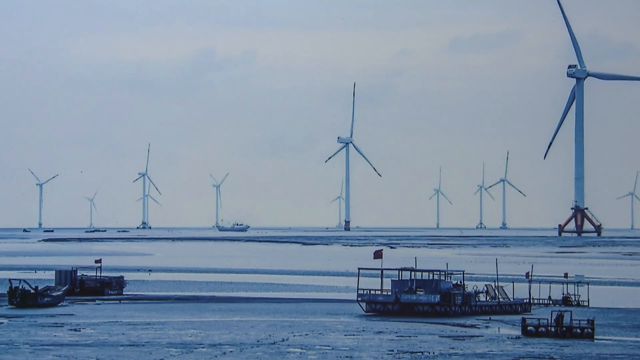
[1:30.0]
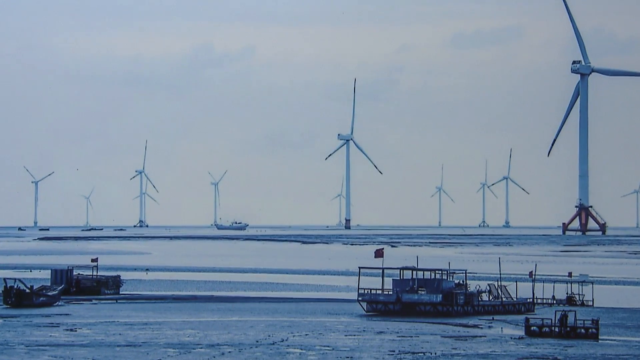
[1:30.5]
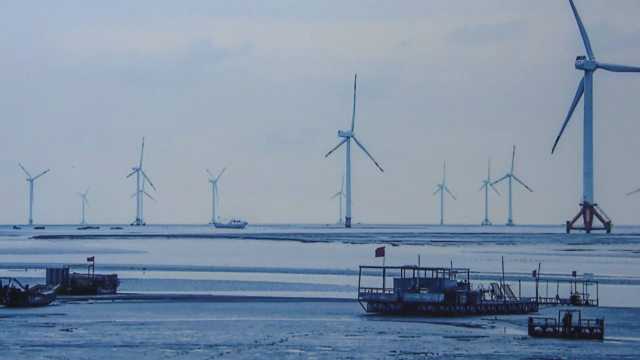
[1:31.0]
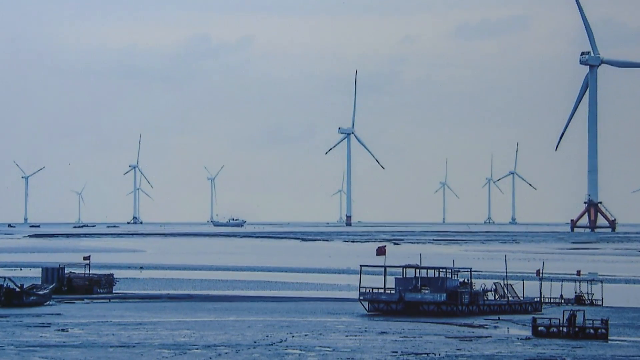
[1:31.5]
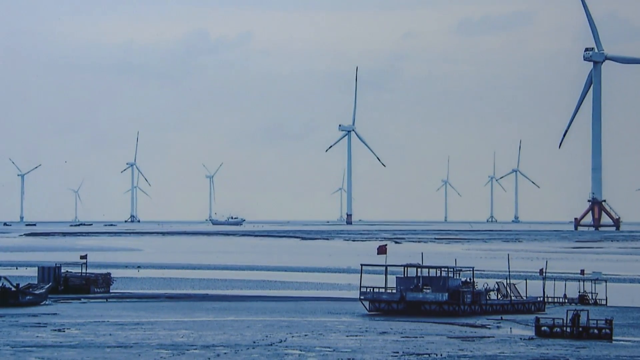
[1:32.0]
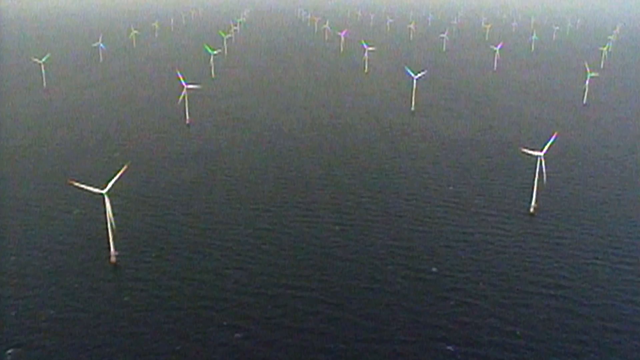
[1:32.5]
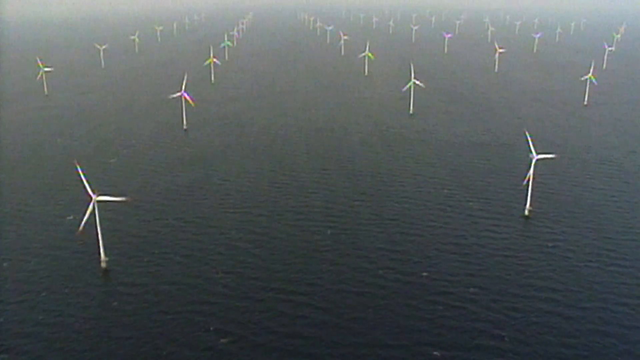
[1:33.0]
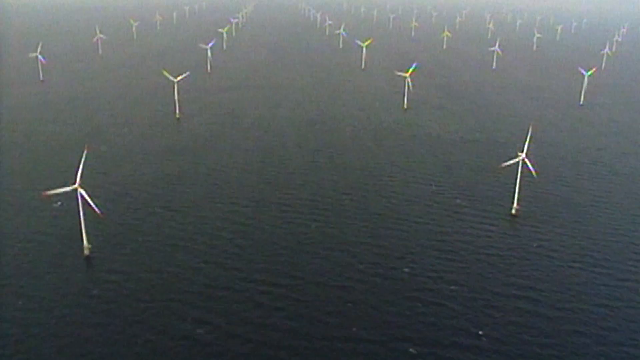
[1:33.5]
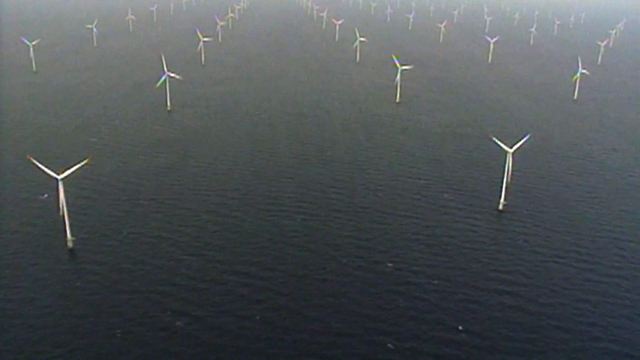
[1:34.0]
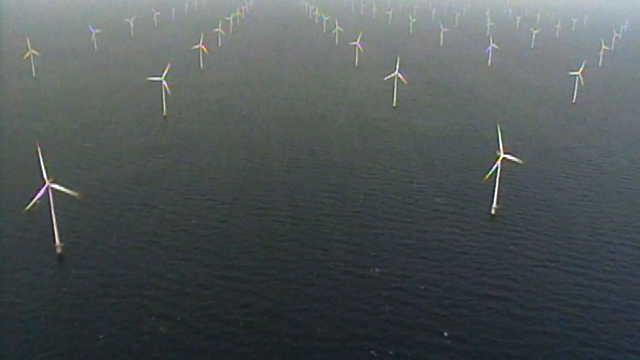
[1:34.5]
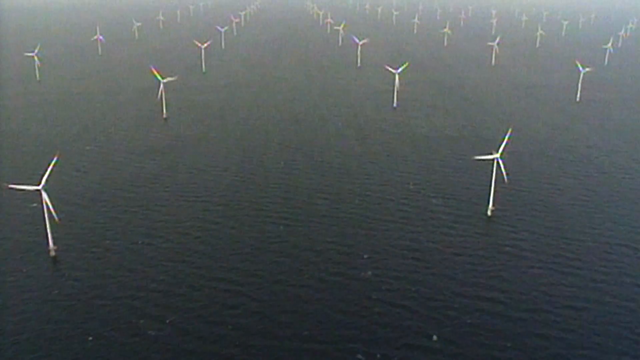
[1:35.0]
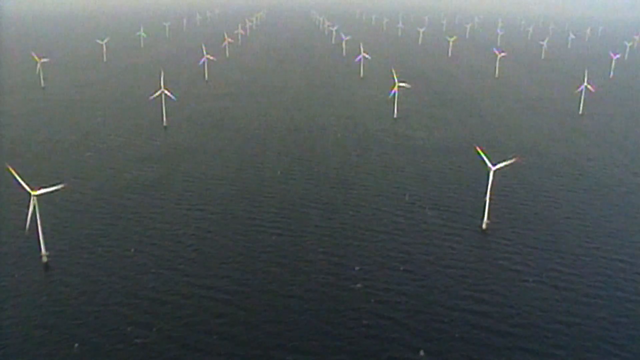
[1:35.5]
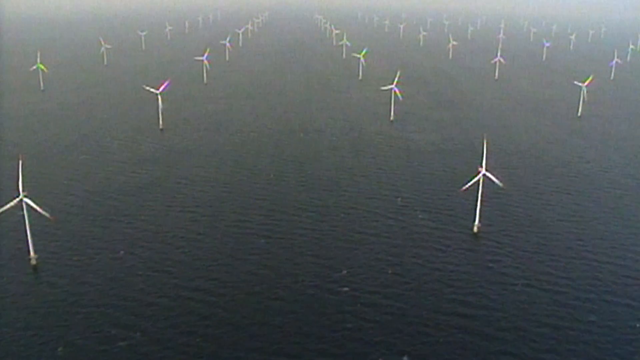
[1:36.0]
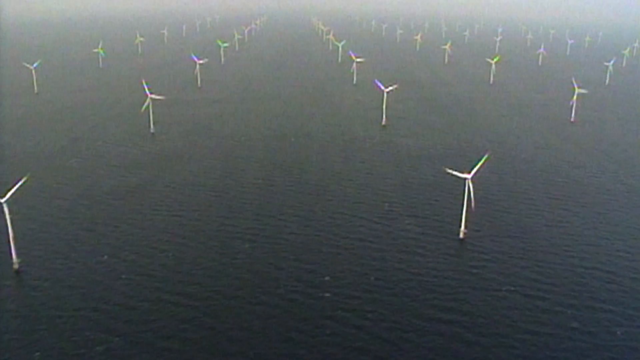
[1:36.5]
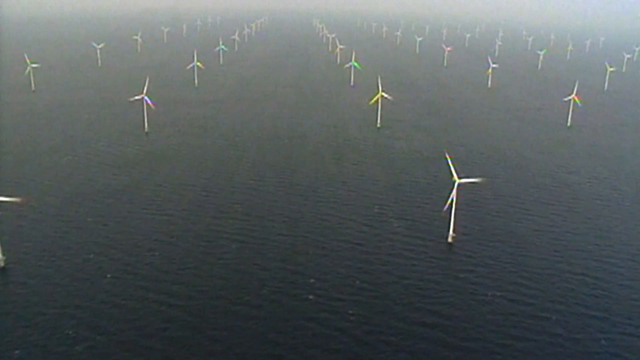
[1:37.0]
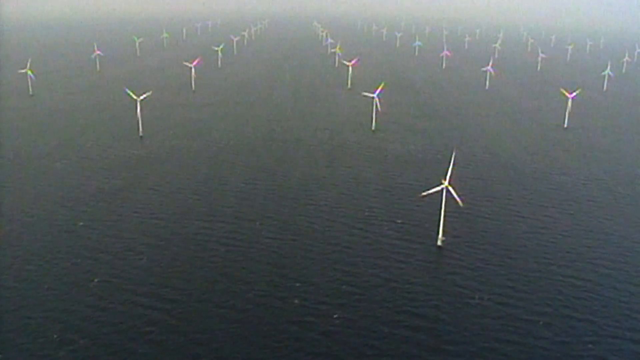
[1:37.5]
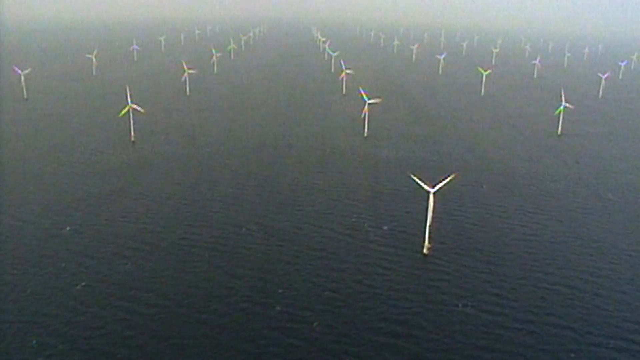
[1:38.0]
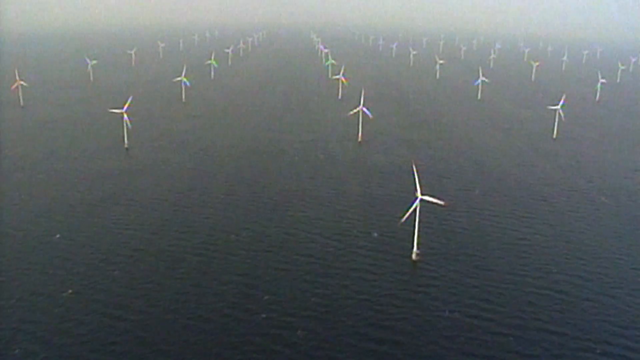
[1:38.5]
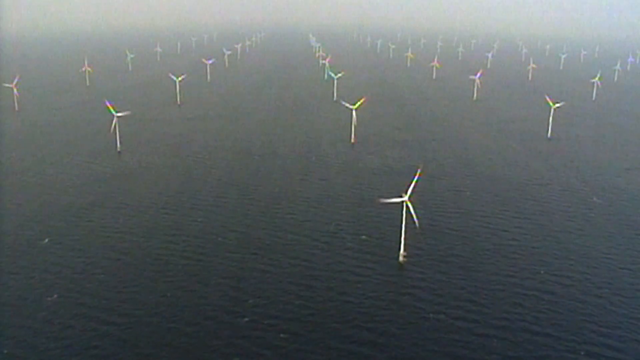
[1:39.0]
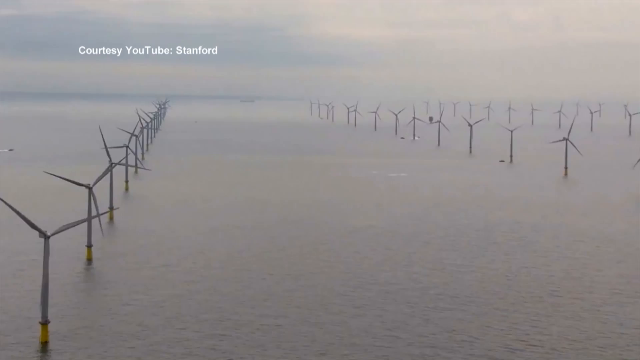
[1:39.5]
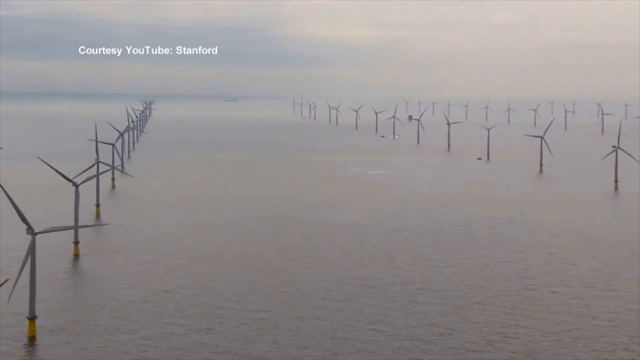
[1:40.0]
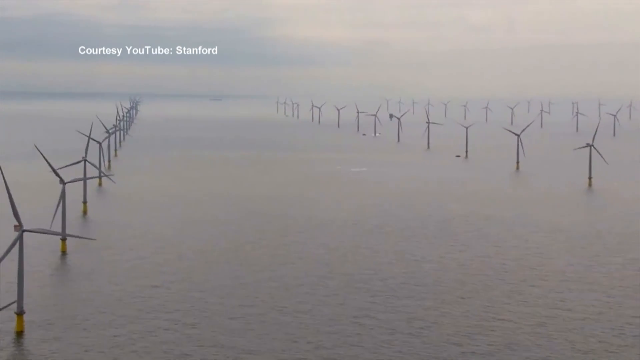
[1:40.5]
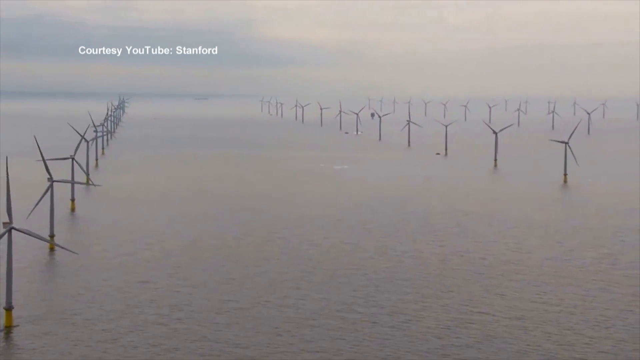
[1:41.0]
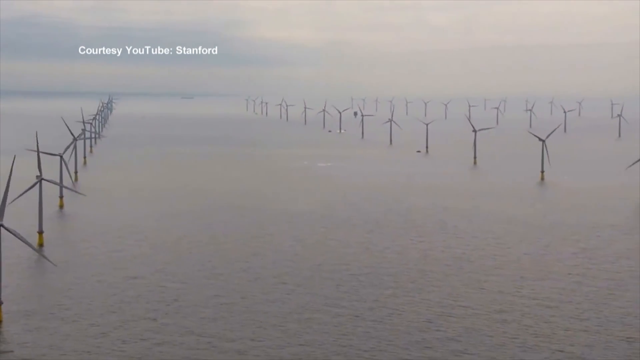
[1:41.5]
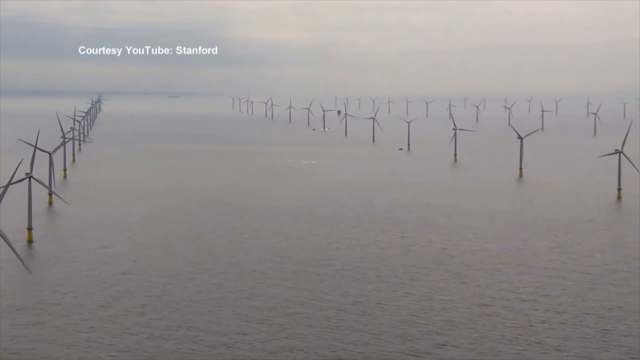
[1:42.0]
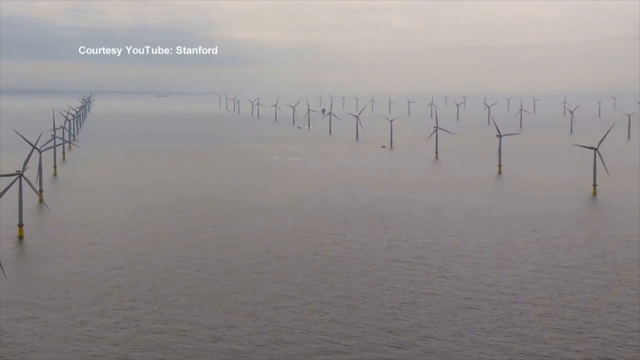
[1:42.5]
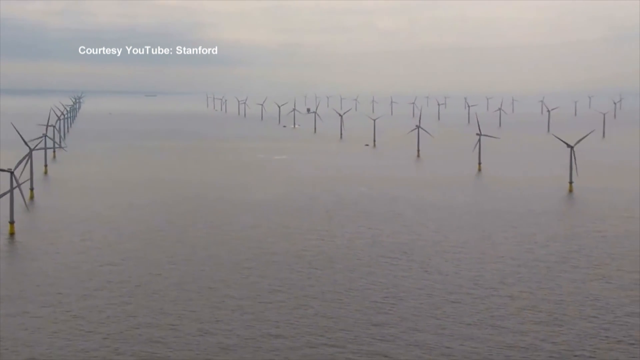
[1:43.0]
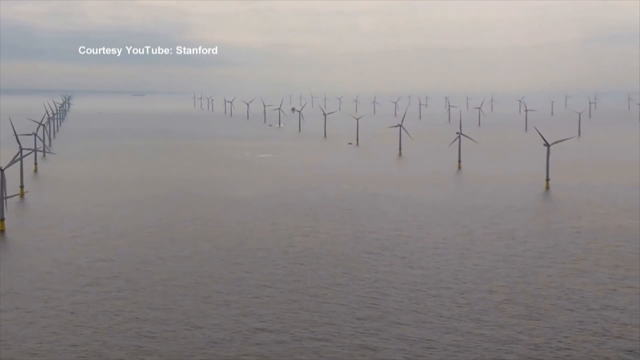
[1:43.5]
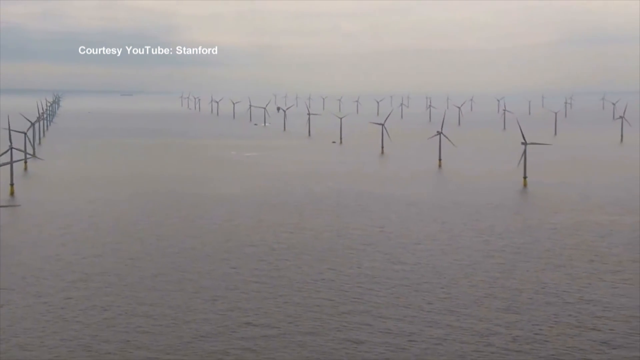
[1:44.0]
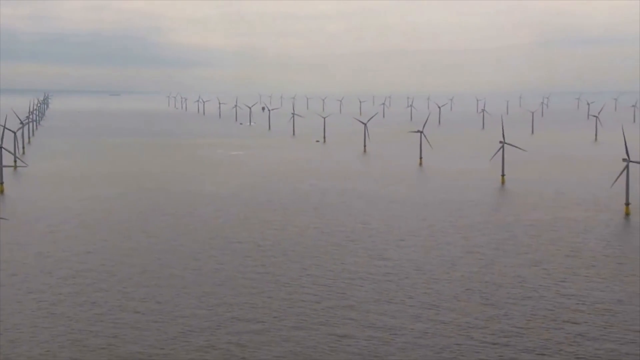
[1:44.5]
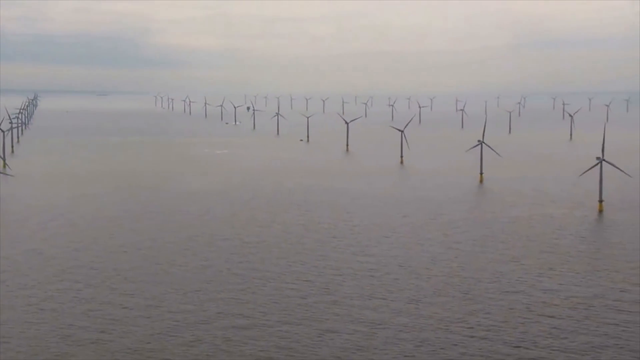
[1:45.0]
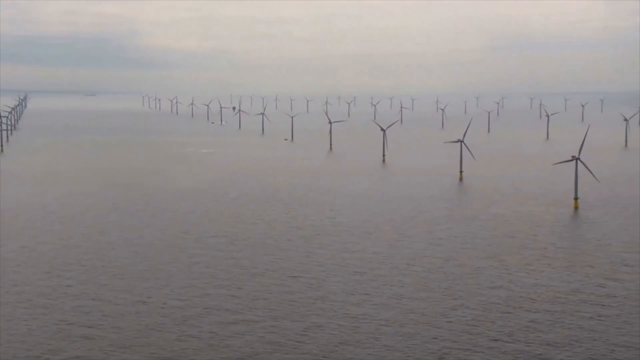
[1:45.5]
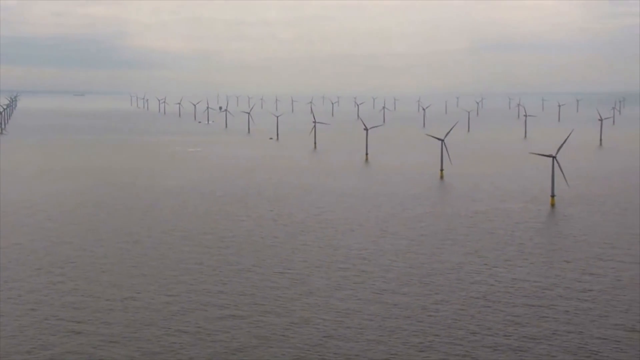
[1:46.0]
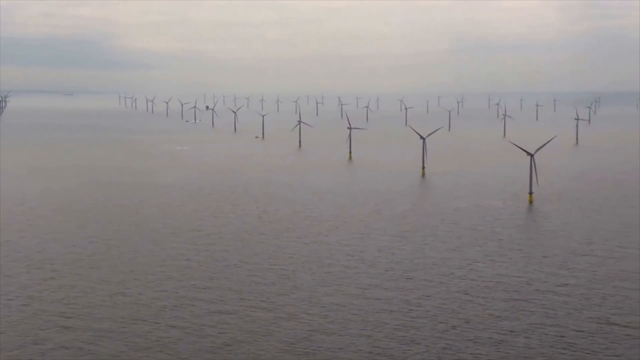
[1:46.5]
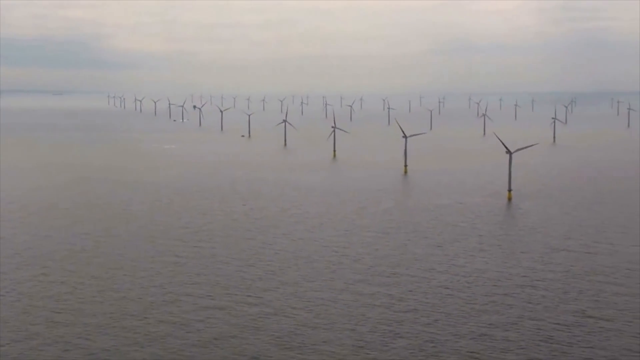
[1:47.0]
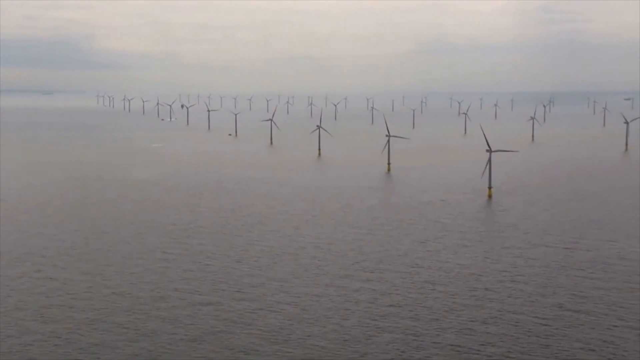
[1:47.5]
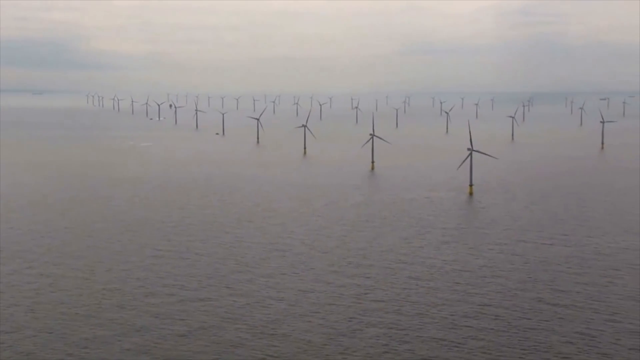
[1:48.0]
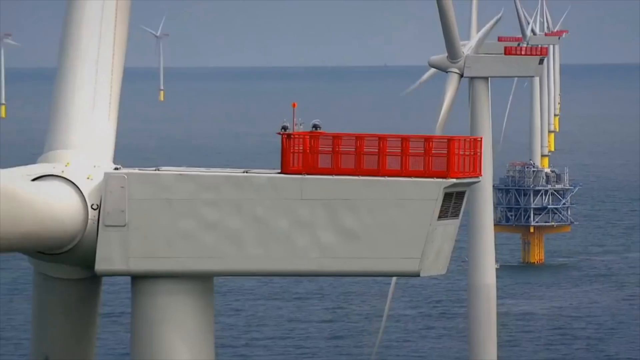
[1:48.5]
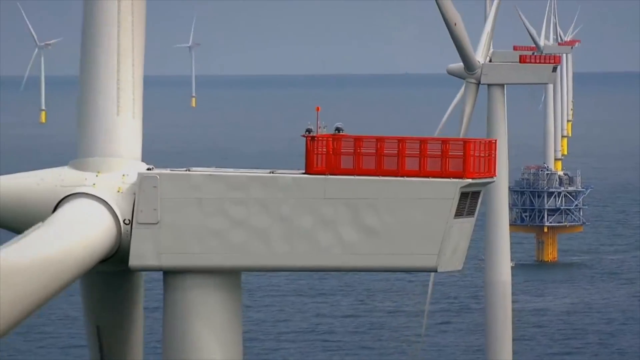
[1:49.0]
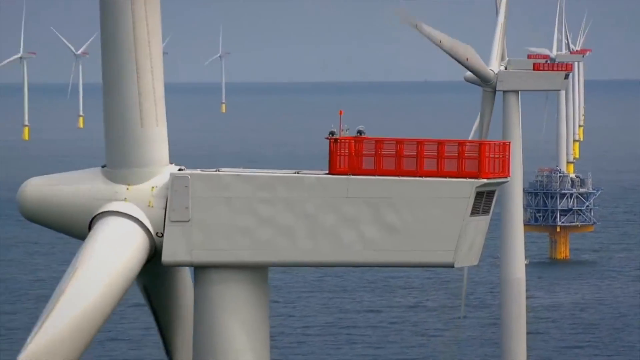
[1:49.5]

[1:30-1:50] The video slowly zooms in on a picture of wind turbines that appear to be out at sea, seen almost as if by someone standing on a harbour looking out at them. The footage then changes to wind turbines filmed directly from above, perhaps from a drone or an aircraft. Dozens of wind turbines stand in a stretch of water stretching to the horizon. Further footage follows that might show the same bank of turbines or another batch, also out at sea. Then comes a close-up of the turbines. One turbine has a light blue frame around it, possibly because maintenance work is being done on it or because it is not yet complete. All the other turbines have yellow bases, grey bodies, grey blades and an orangey-red box on the back, apparently where the motor would be mounted.